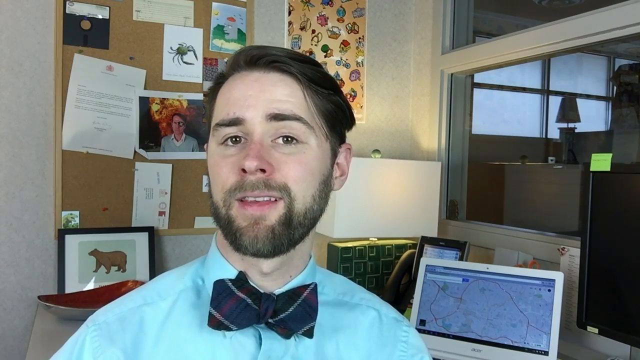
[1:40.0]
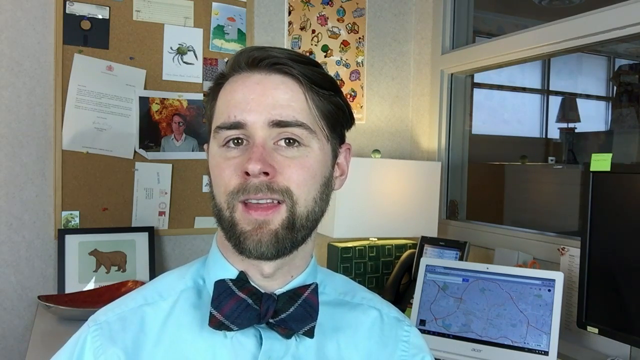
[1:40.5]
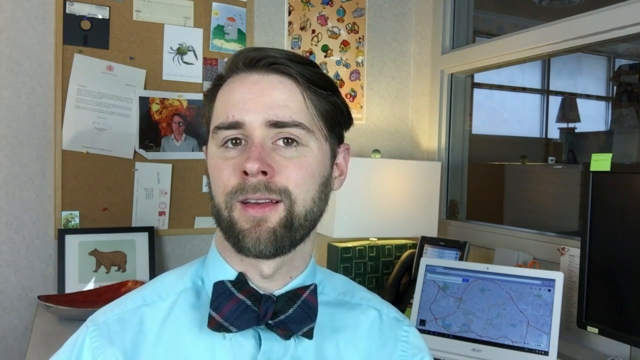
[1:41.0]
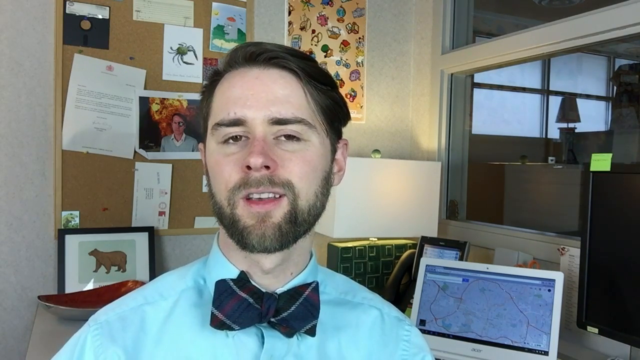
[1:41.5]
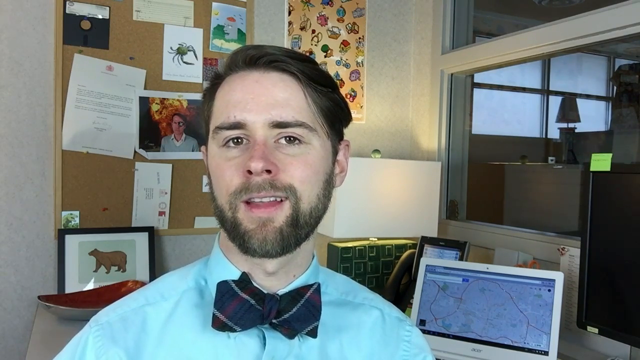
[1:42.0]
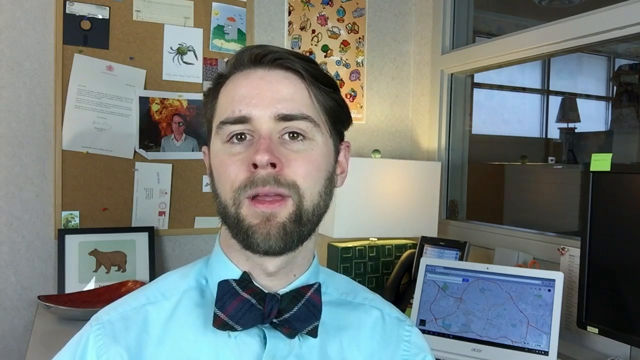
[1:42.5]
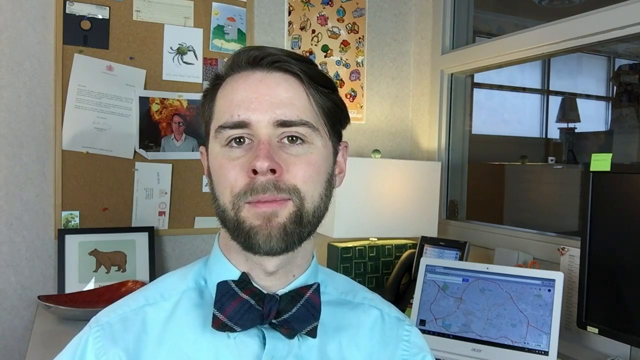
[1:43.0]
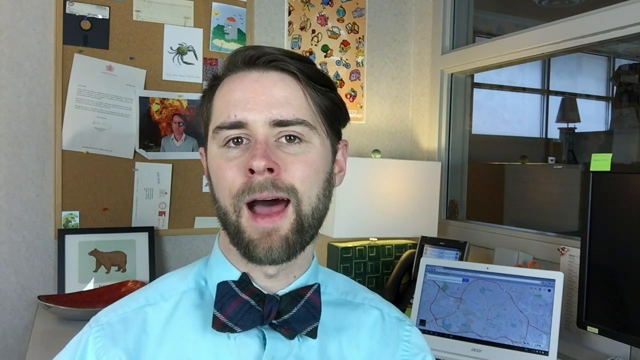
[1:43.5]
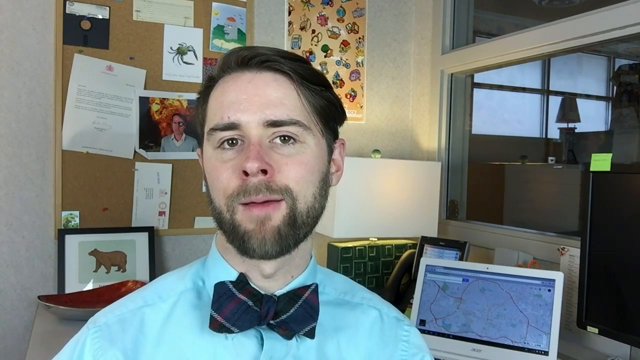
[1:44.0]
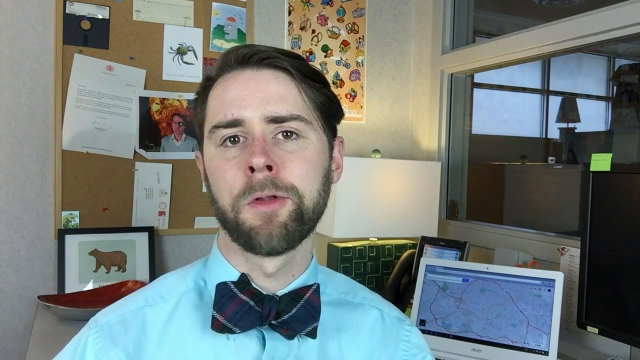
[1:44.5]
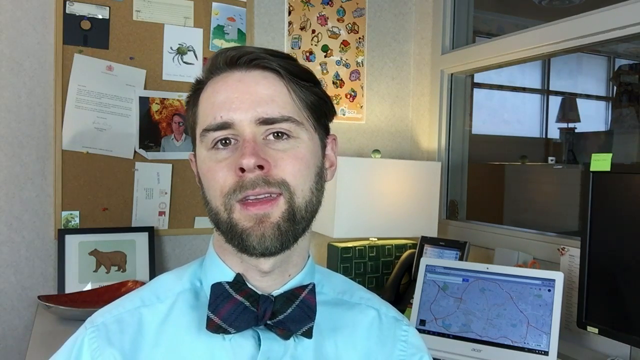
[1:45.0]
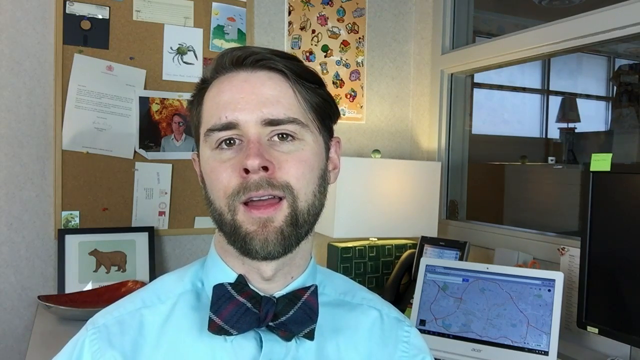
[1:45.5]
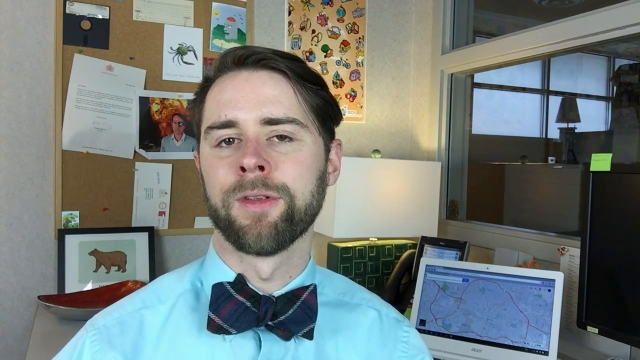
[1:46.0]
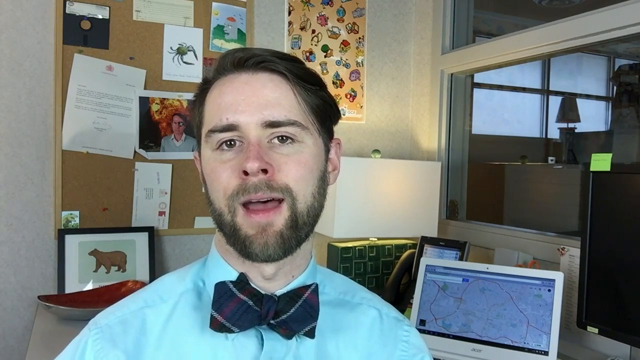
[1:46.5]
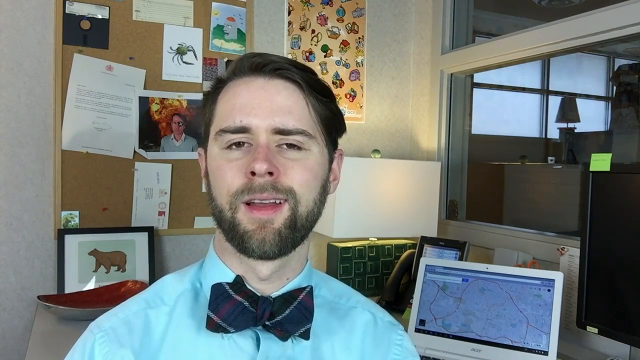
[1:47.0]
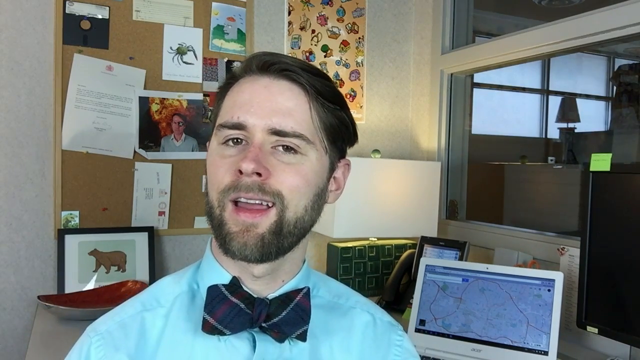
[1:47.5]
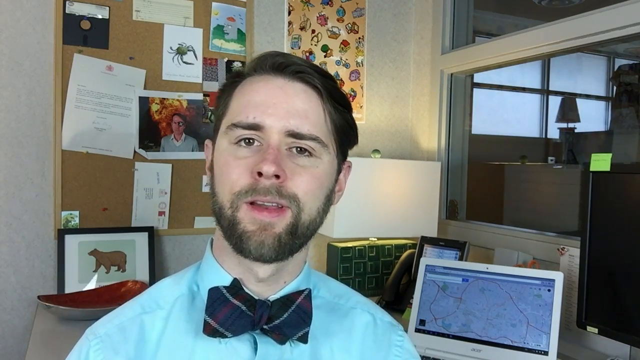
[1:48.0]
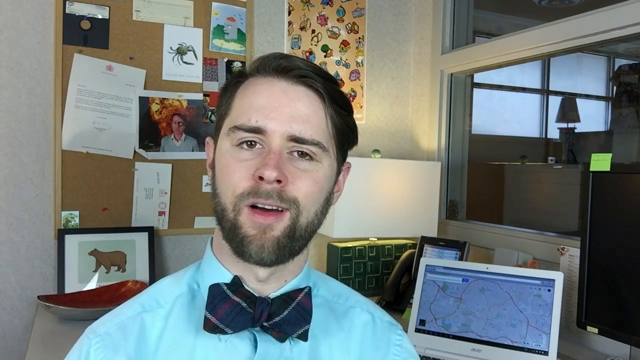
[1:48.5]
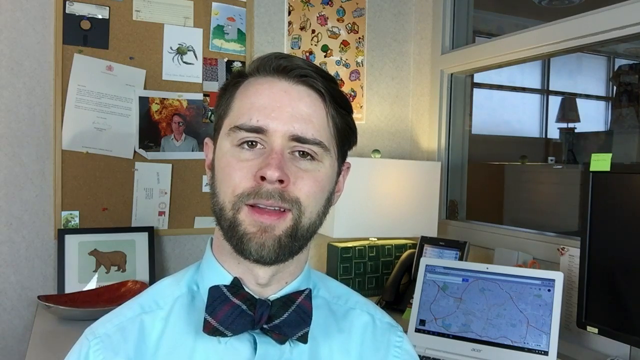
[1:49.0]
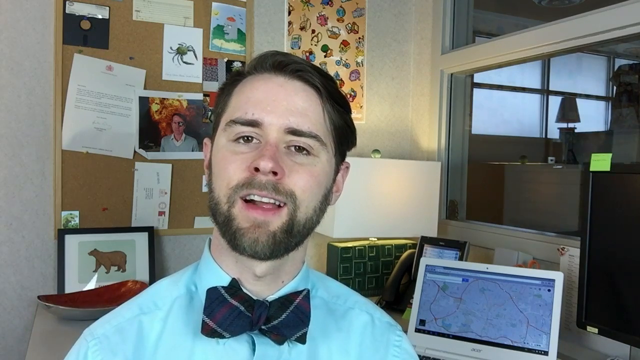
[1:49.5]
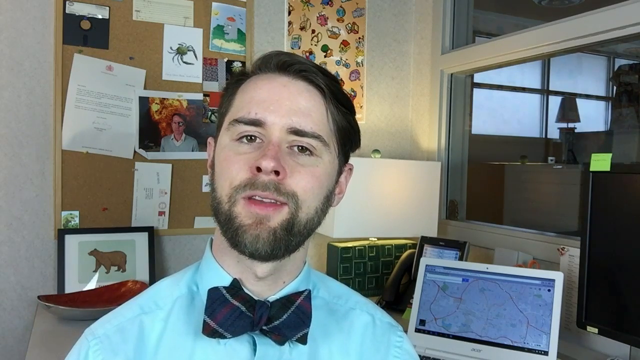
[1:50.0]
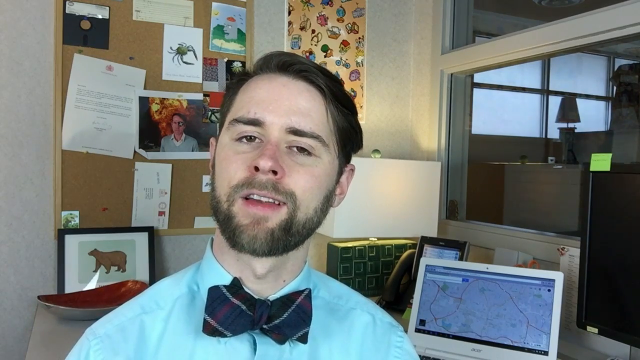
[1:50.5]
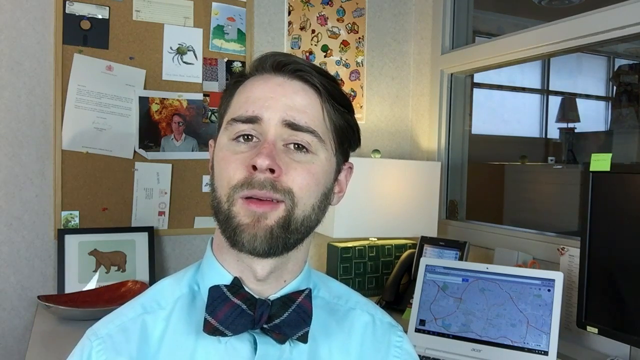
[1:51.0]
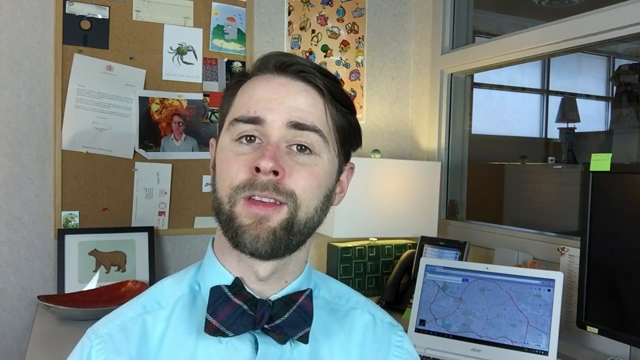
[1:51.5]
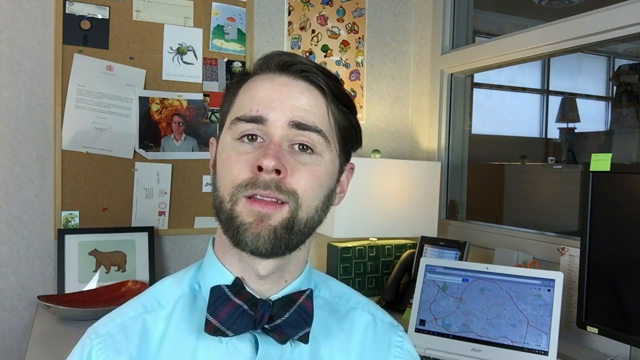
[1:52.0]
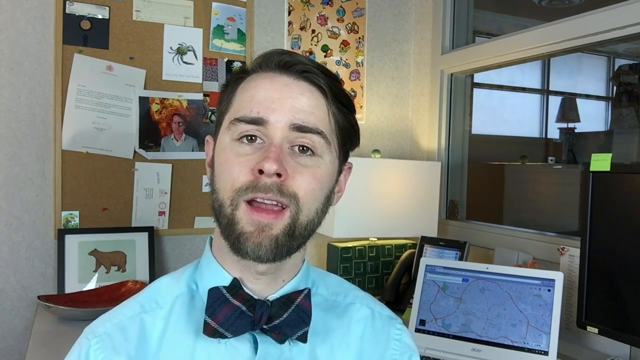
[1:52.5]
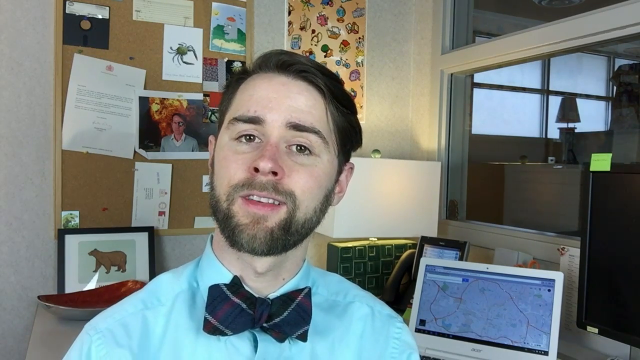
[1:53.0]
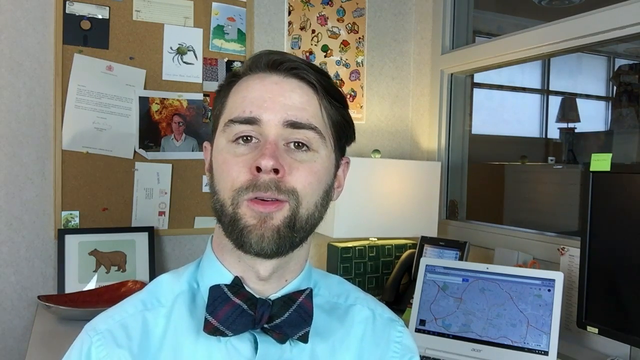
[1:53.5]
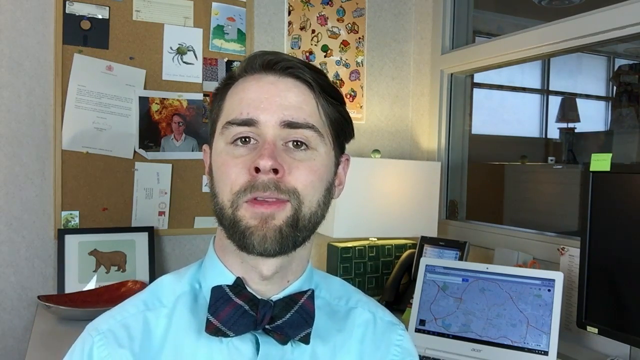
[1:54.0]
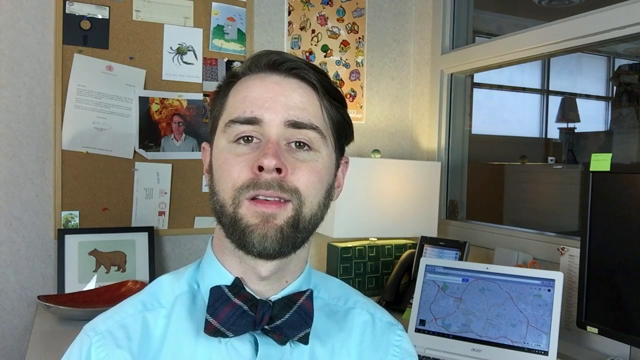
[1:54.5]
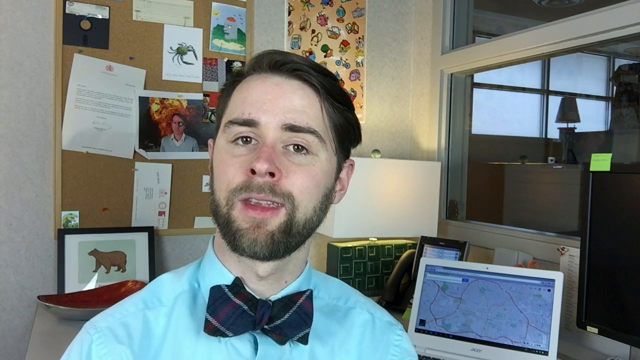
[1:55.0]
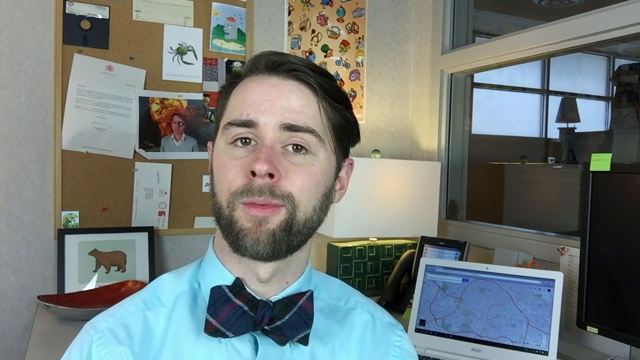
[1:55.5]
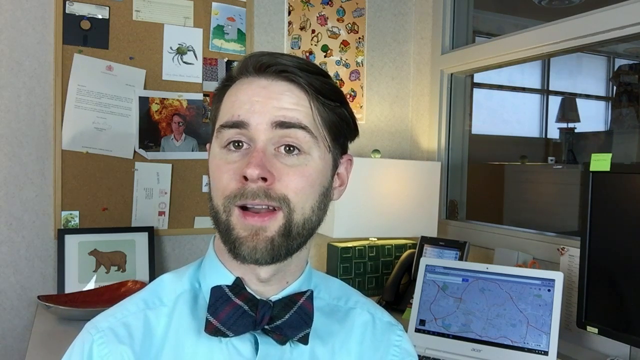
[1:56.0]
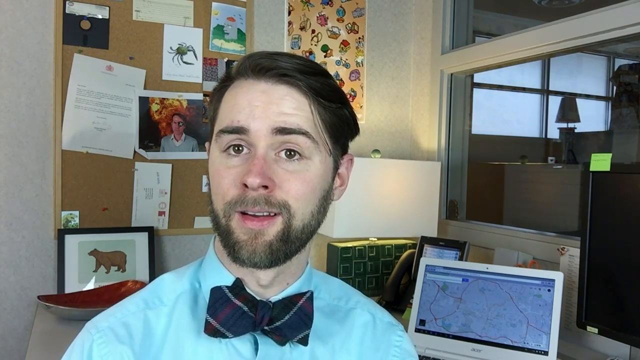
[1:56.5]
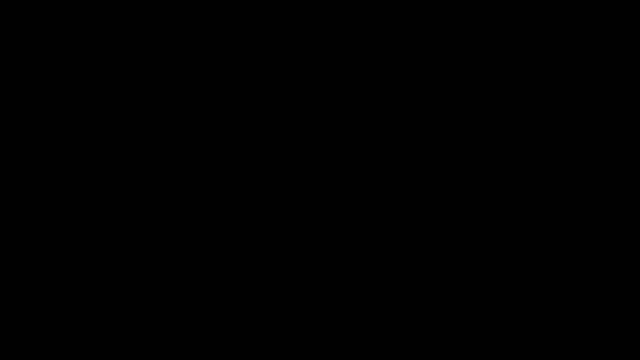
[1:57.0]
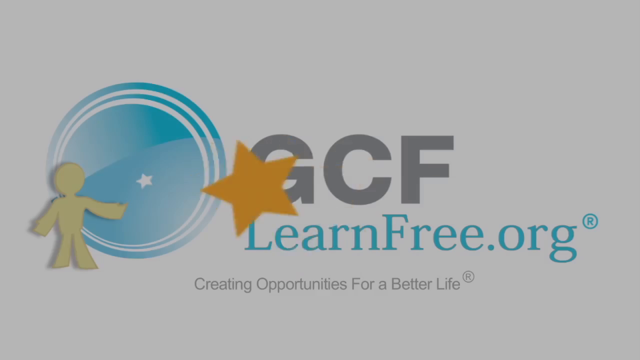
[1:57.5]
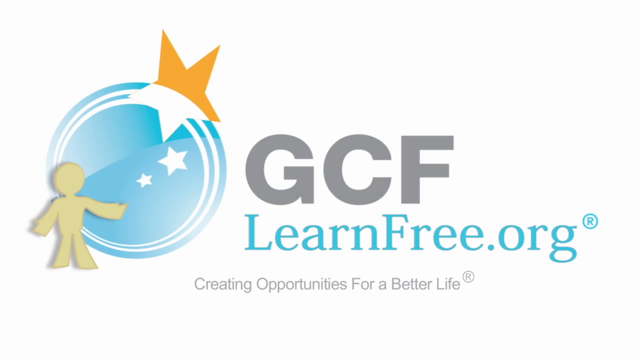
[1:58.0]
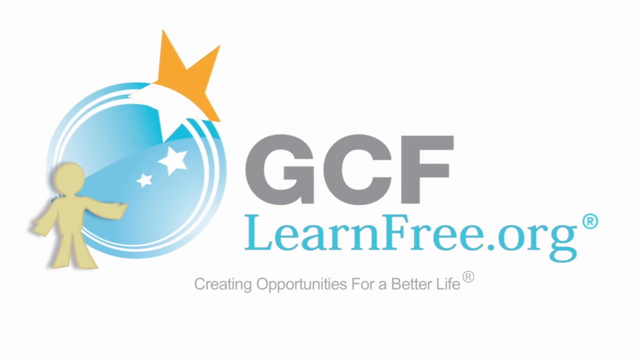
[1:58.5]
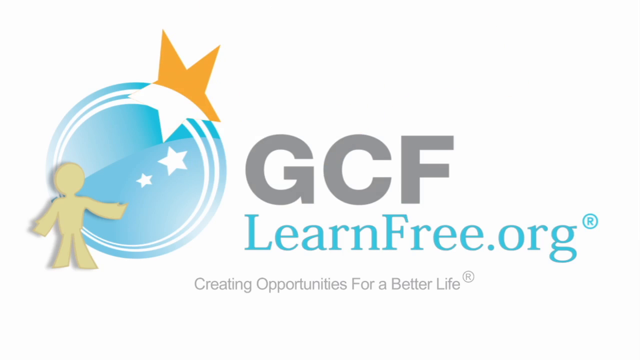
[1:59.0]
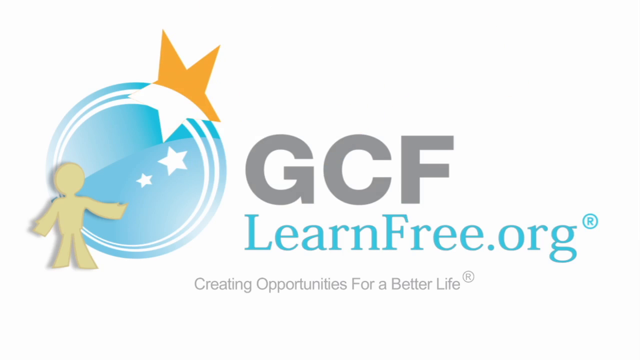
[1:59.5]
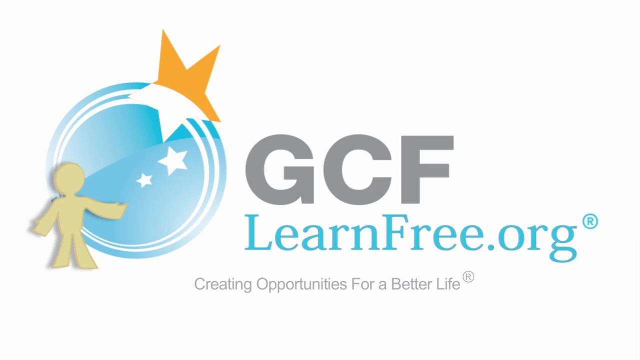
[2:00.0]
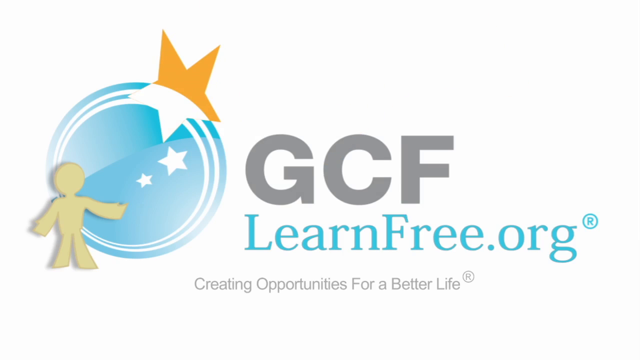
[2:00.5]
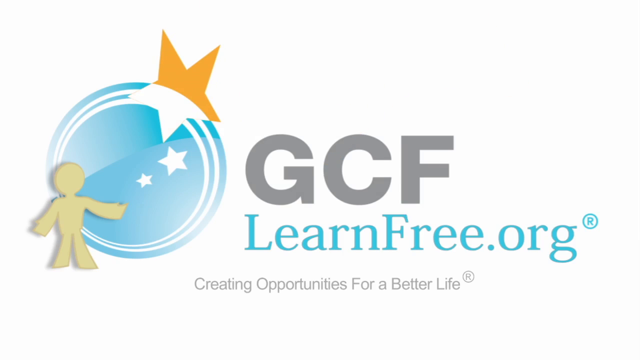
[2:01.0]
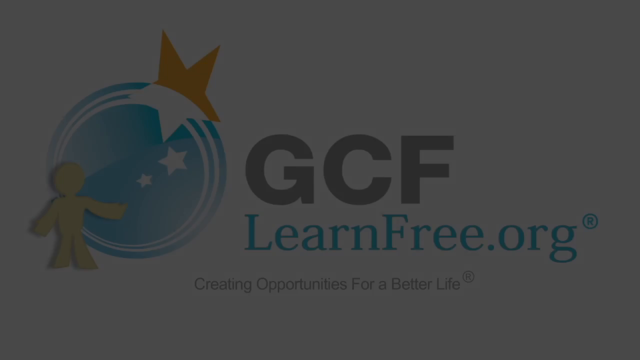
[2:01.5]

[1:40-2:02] A man in a blue shirt and a black bow tie with white stripes sits at a desk. He has neatly groomed black hair and a neatly trimmed black beard. Smiling the whole time with a jovial expression, he speaks to the viewer, motionless except for speaking. Behind him is a bulletin board with various photos and papers attached, and there is a poster on the wall and a lamp behind him. A laptop computer behind him is open to Google Maps, showing an image of Raleigh, North Carolina with a route from West Harcourt Street to Beasley's Chicken and Honey. Behind the laptop is a window reflecting the interior of the office. The video fades out and fades back in to a logo reading "GCFLearnFree.org" next to an icon of a blue circle with three stars beside a yellow silhouette of a human being. Beneath the logos is the slogan "Creating Opportunities for a Better Life."